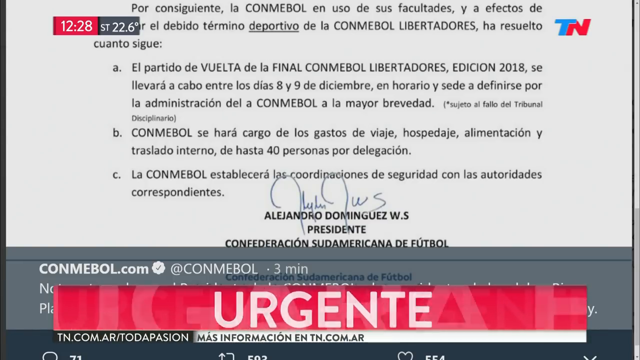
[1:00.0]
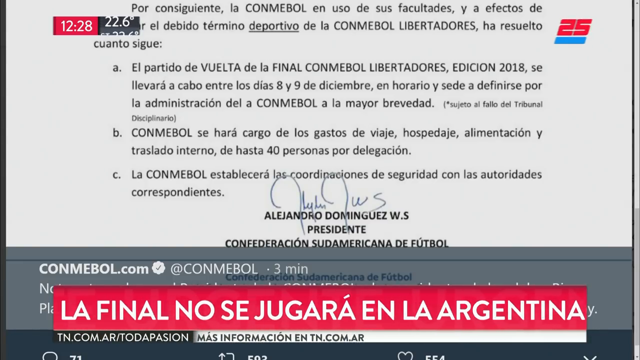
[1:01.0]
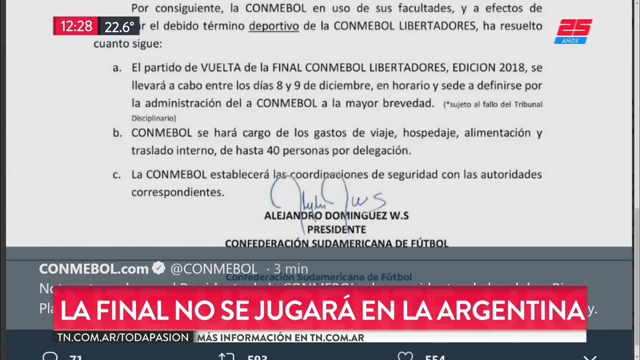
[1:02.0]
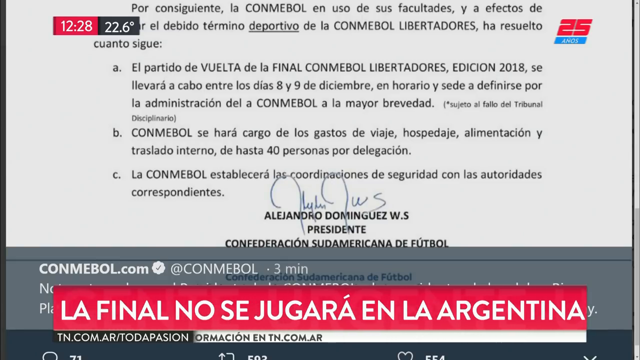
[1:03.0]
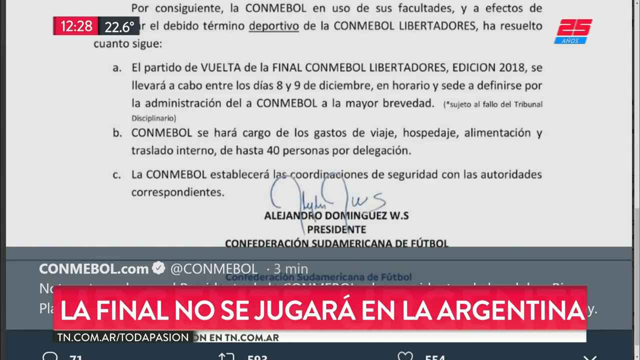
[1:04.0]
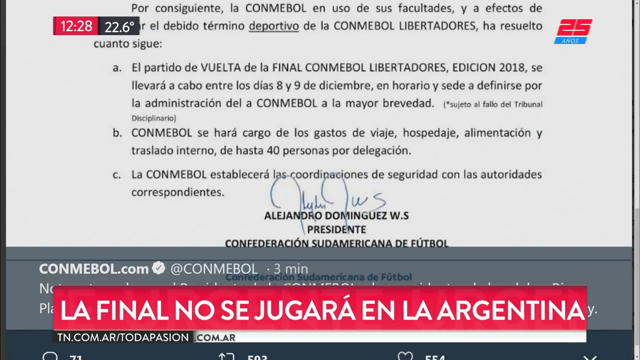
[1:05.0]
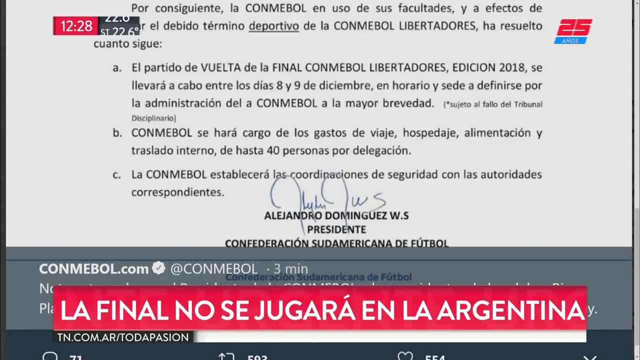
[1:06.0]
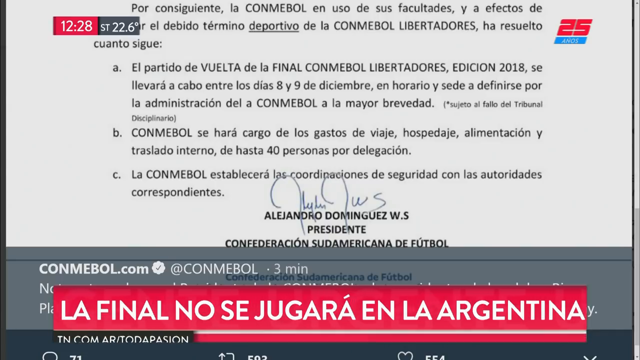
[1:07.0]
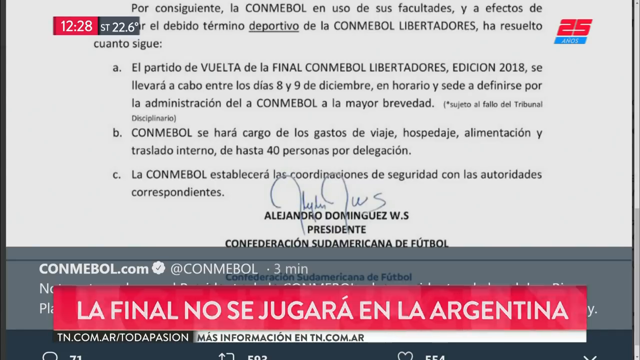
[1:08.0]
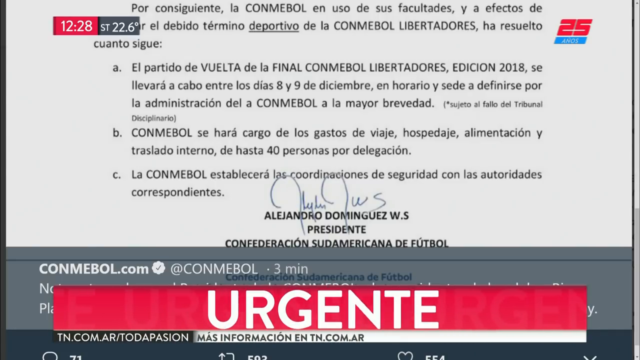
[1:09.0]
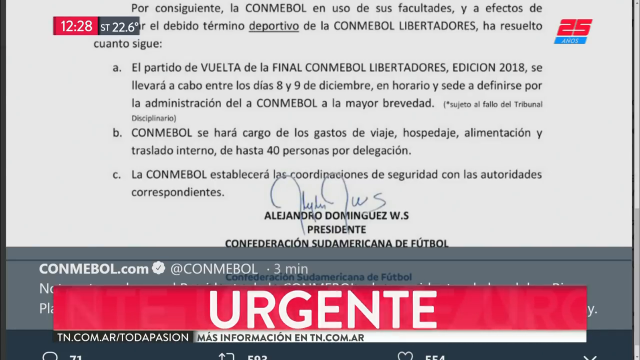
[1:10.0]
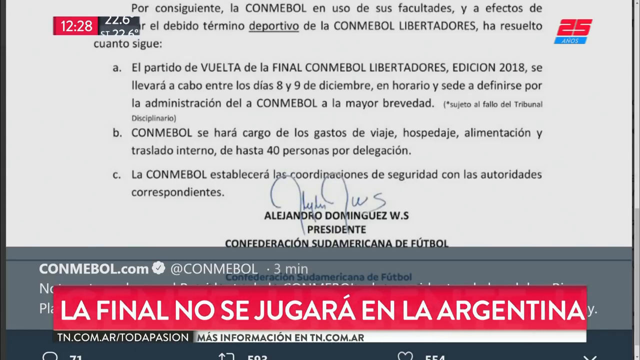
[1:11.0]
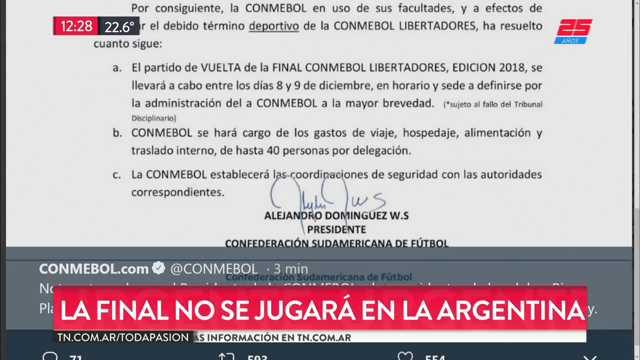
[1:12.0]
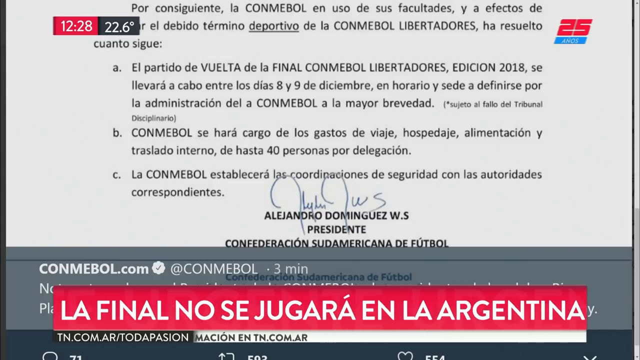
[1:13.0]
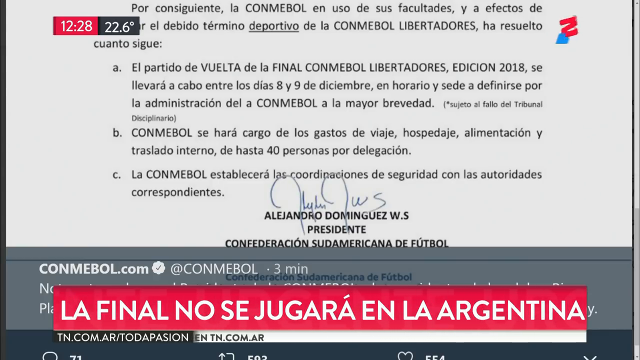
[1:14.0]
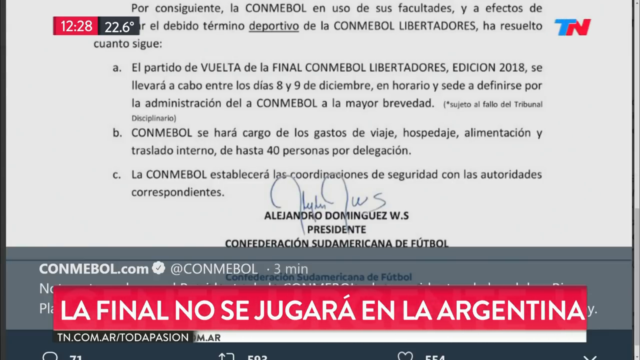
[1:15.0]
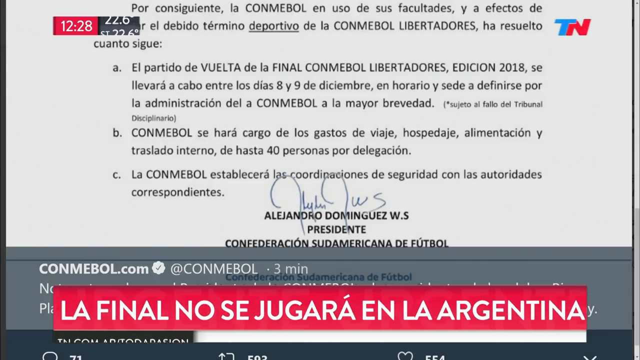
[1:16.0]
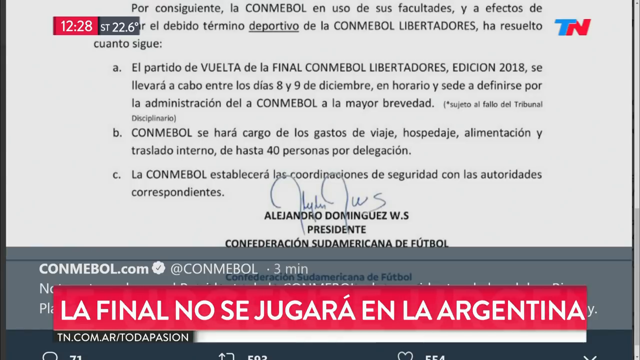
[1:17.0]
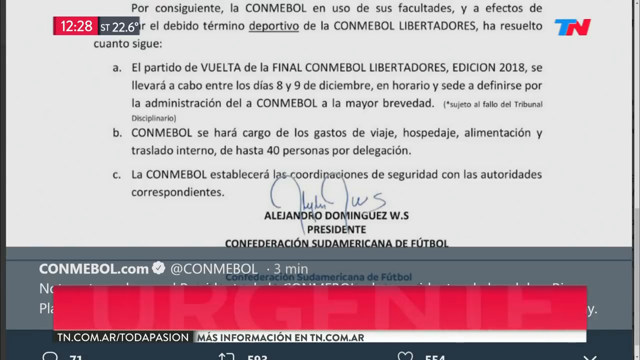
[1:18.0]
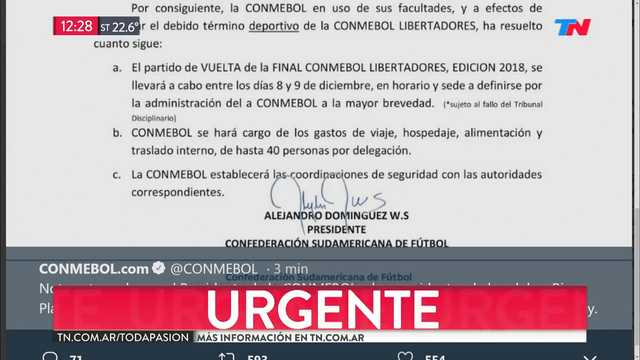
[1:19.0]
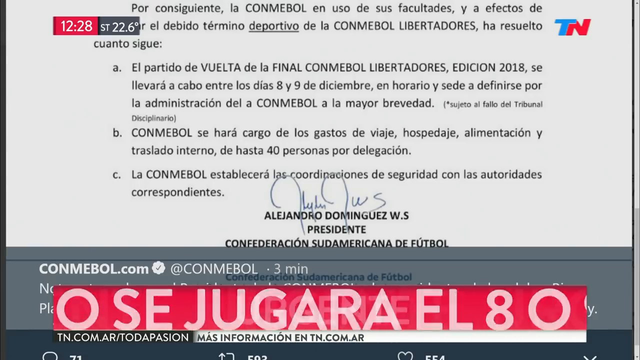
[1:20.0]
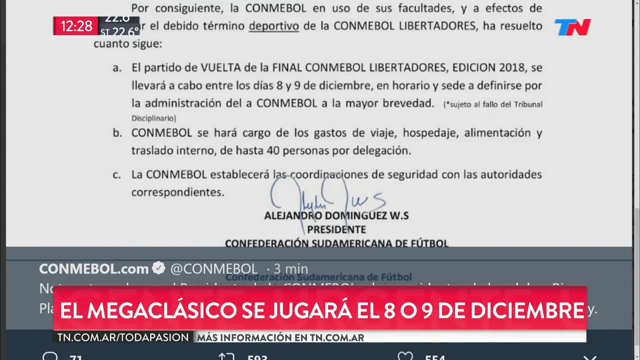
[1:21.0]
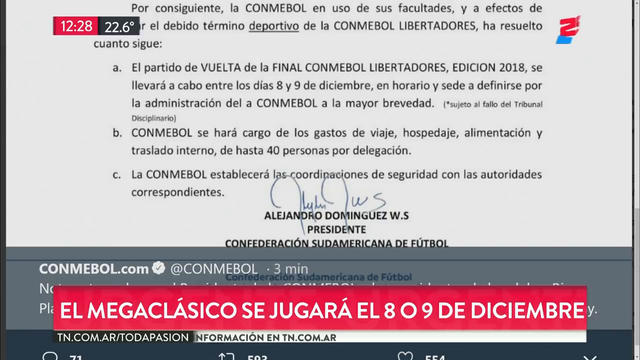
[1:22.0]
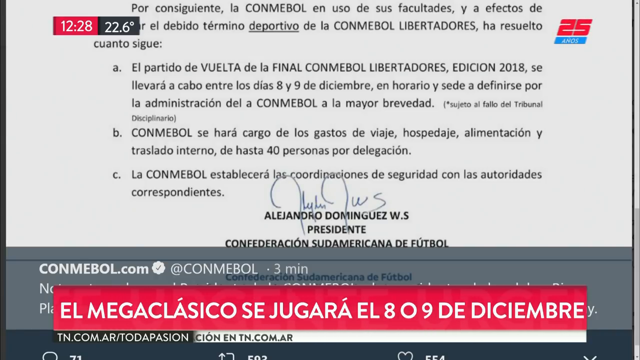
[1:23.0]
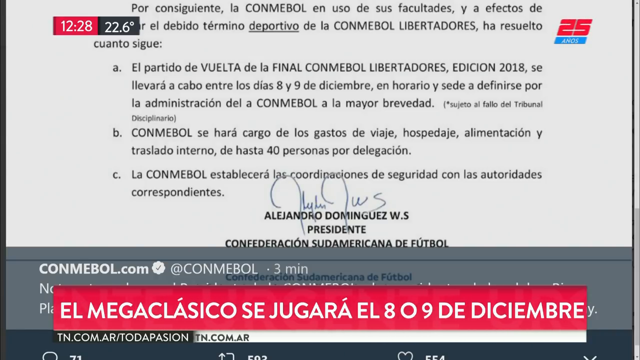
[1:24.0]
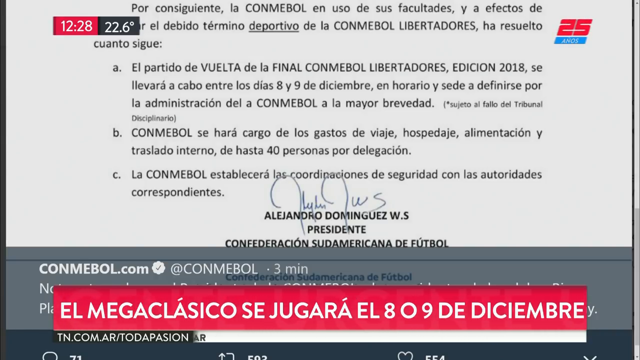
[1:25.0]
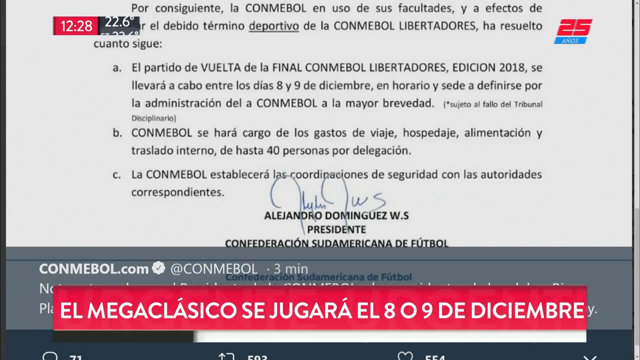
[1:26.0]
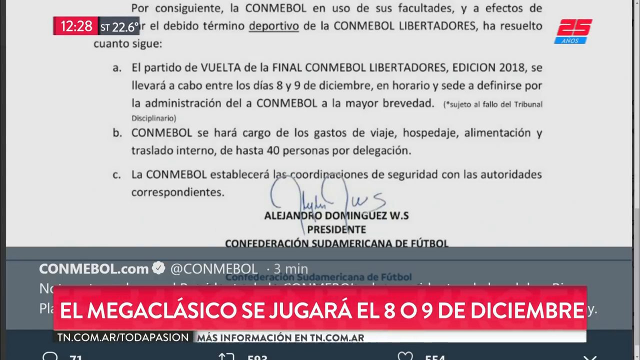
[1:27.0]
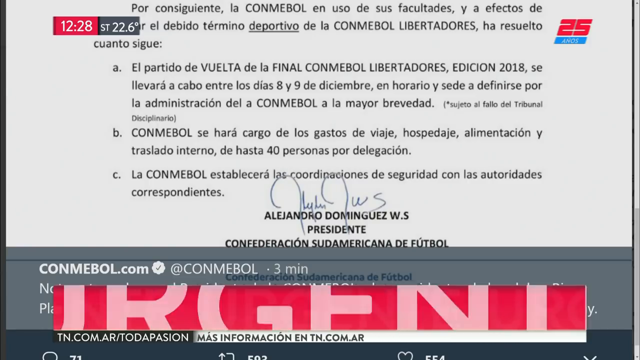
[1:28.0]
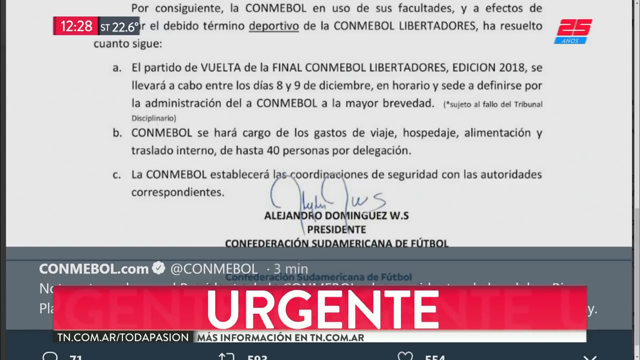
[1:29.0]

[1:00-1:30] What appears to be a news screen shows, at the top, what appears to be a red and blue logo reading "TN", and the time "12:28" in the top left. What appears to be some sort of document with black text on a white background is in a foreign language, with a signature that looks hand-drawn at the bottom. At the bottom of the screen is a red banner with a white and black one below it, which is also changing and updating. The red banner changes to spell "URGENTE" and then changes again, the white box below keeps changing, and its text scrolls to the left whenever new text appears.